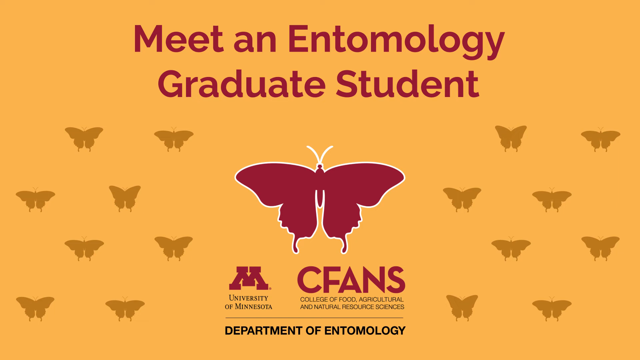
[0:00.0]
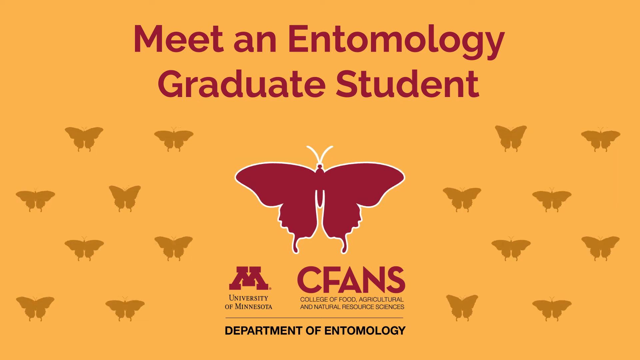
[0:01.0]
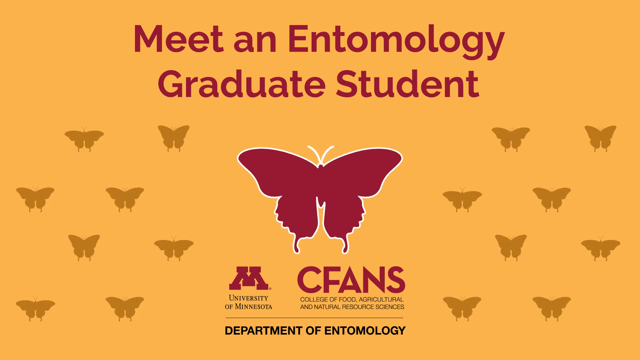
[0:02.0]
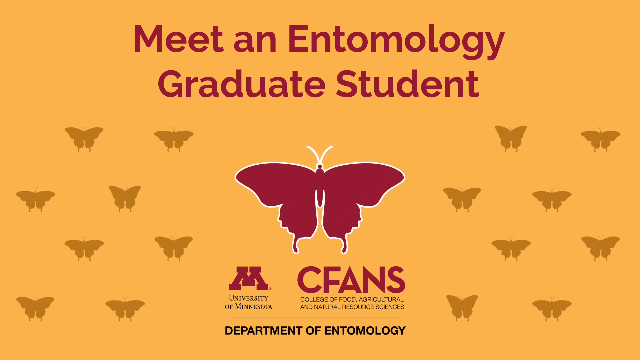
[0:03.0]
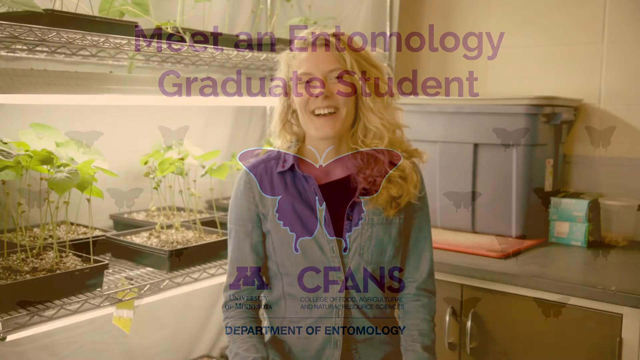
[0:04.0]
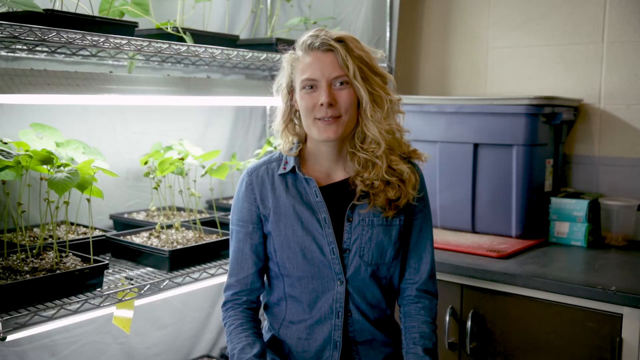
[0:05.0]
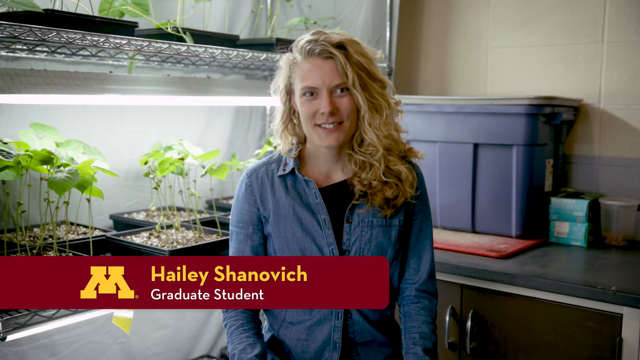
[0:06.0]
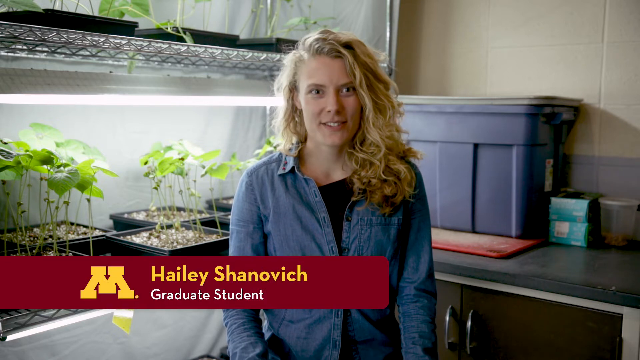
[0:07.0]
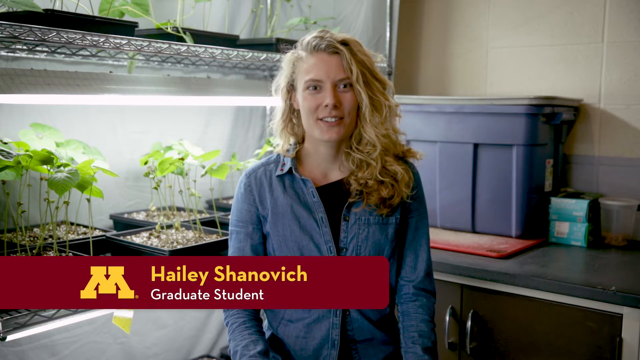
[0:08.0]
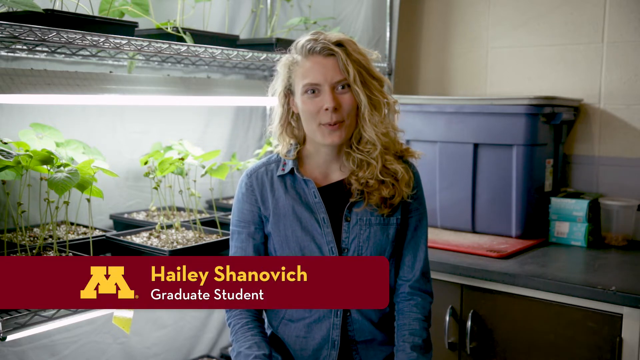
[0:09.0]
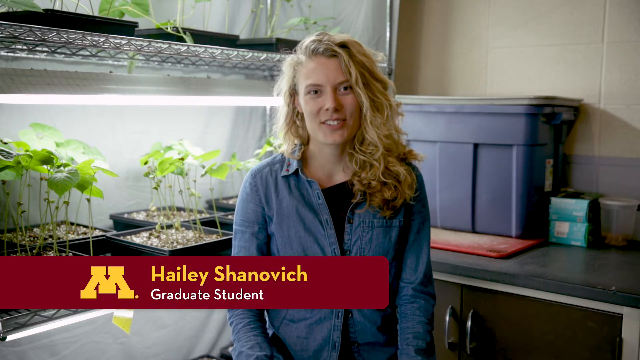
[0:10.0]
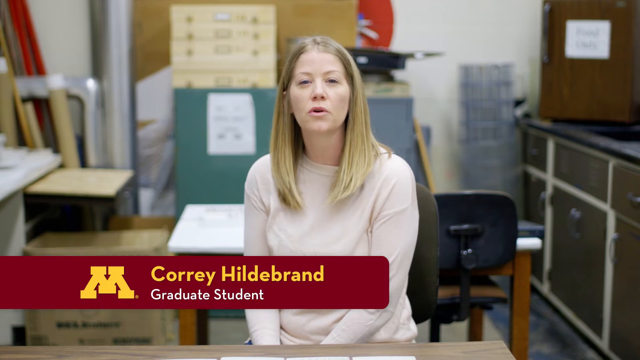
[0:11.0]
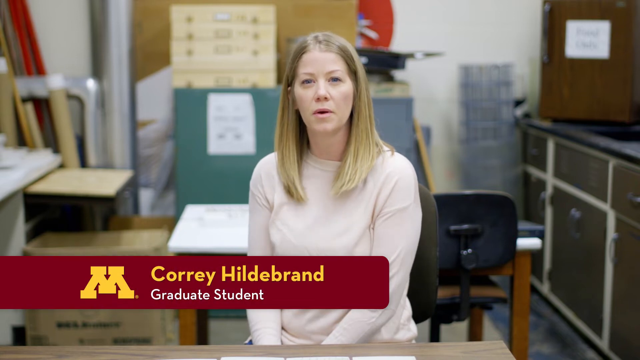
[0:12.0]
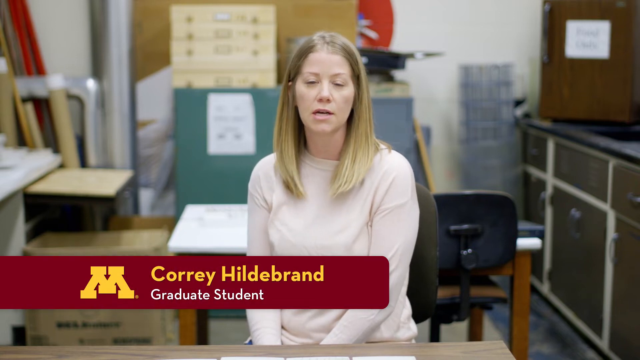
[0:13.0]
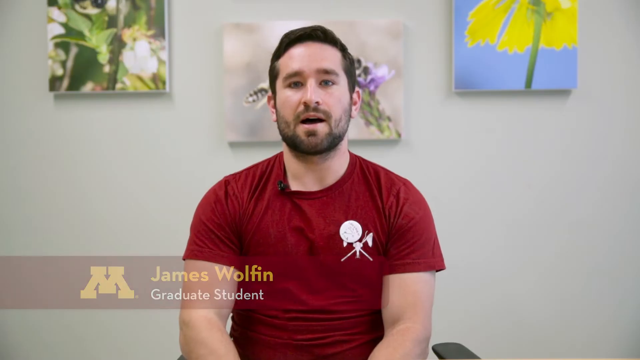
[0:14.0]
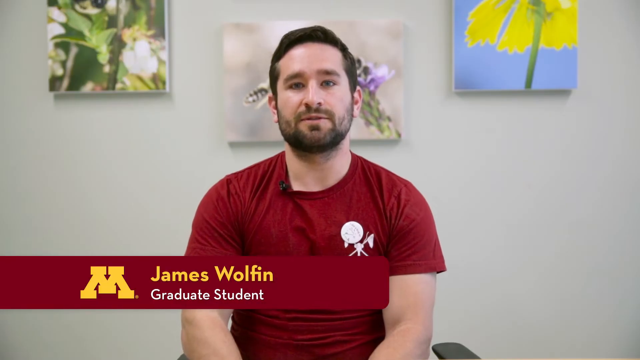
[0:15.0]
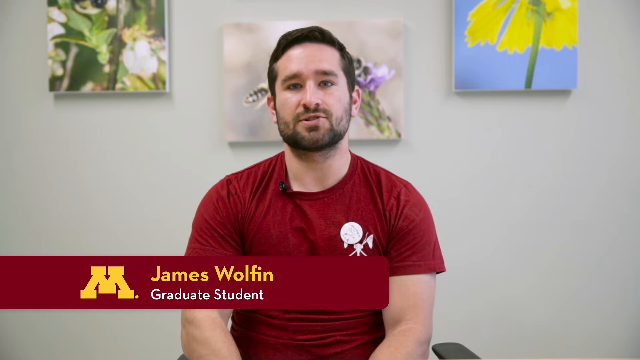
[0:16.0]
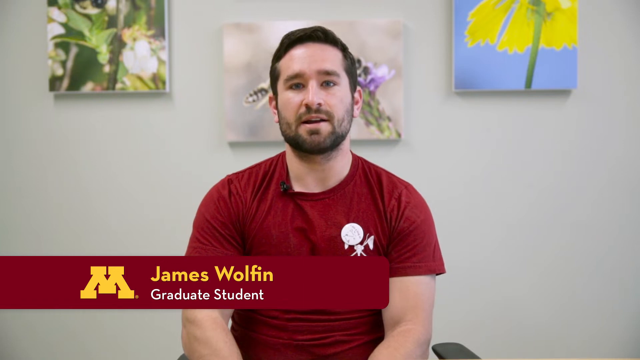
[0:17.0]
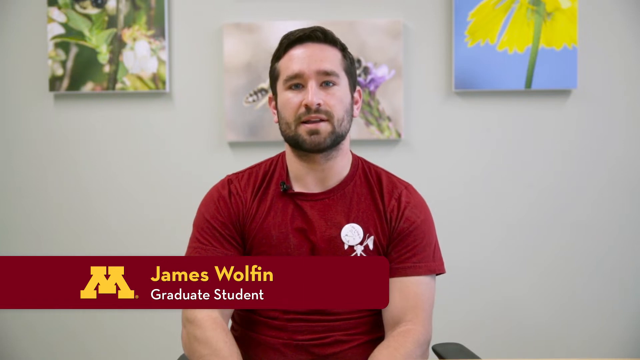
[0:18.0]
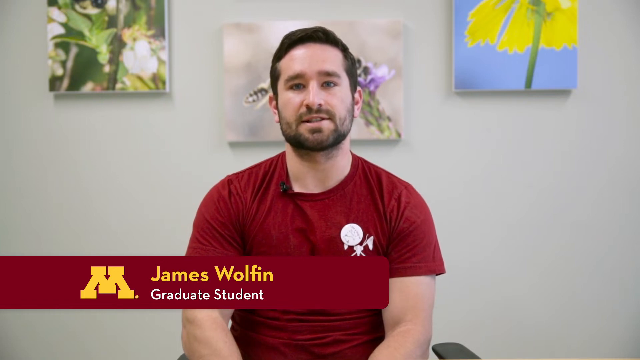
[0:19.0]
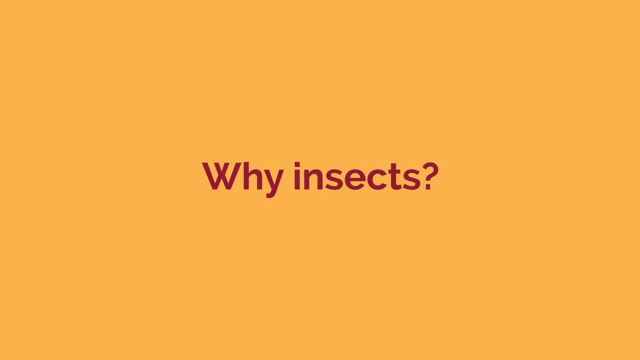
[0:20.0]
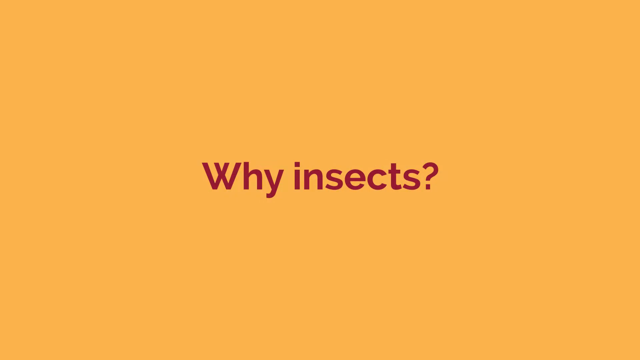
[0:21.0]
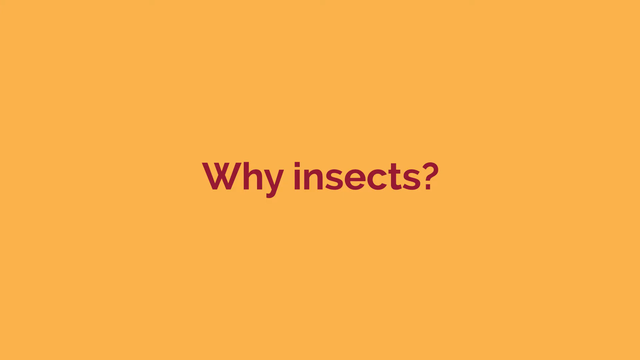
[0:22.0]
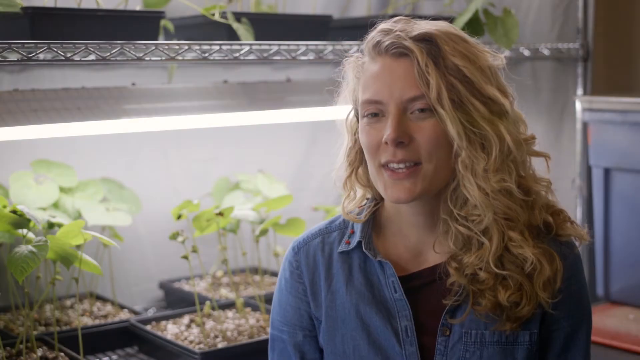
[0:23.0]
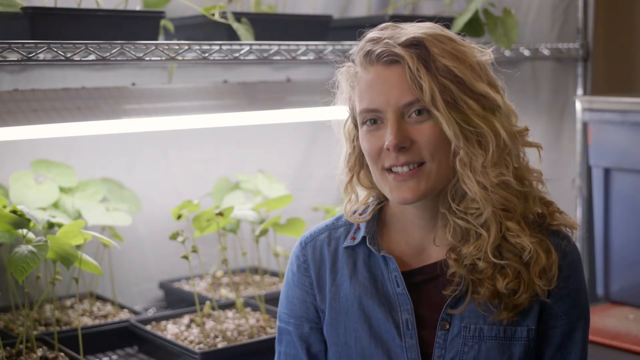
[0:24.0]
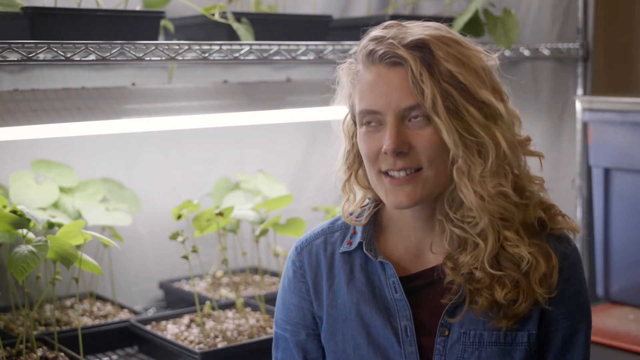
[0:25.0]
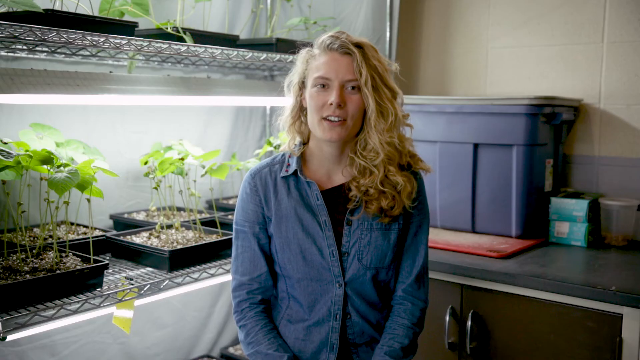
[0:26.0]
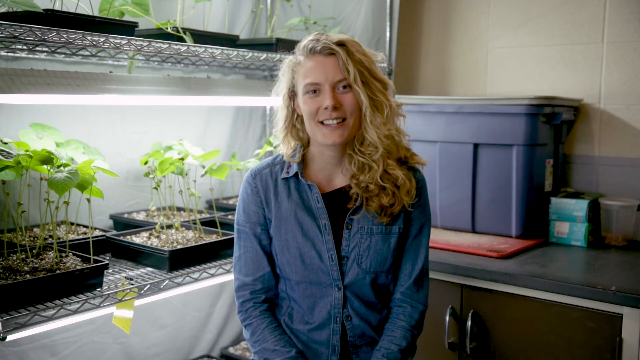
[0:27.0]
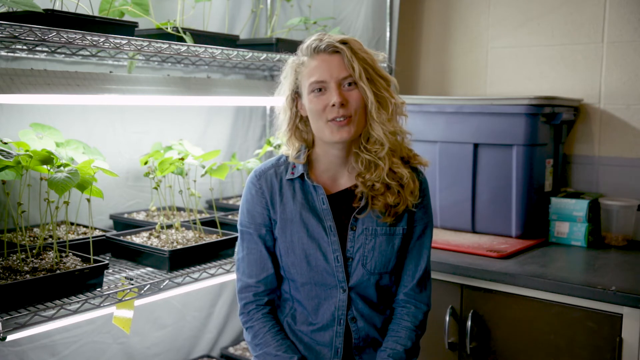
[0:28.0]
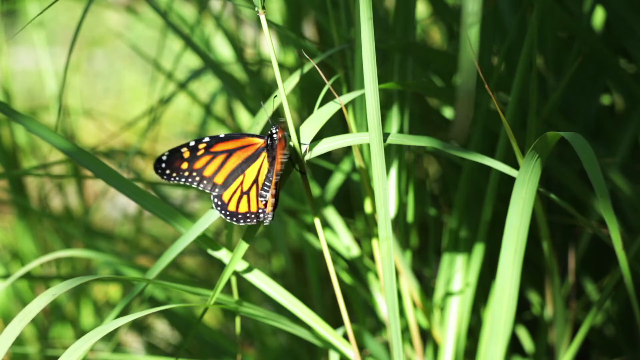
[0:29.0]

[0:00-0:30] An orange background shows red bold text reading "meet an entomology graduate student." Kind of silhouette butterflies appear on the left and right sides, along with a very large red butterfly with a white outline. The University of Minnesota logo is visible, as is a CFANS logo with black text reading "College of Food Agricultural and Natural Resource Sciences" and black text reading "Department of Entomology." The butterflies flap their wings. The scene then transitions to a woman with long, blonde, curly, shoulder-length hair wearing a denim jacket. Plants are behind her, along with a large container. She looks at the camera and talks, and a red banner appears with yellow and white text reading "Haley Shinovich graduate student." Next comes another woman with long, blonde, shoulder-length hair in a room; the background is slightly blurred but very cluttered and disorganized. Text reads "Corey Hildebrand graduate student," and she talks. A man wearing a red t-shirt appears with his name, "James Wolfen, graduate student," and pictures of different flowers are on the wall behind him. An orange background then shows red text reading "why insects?" The original woman appears on screen again, talking, followed by a video of a black, white, and orange butterfly sitting on a leaf.